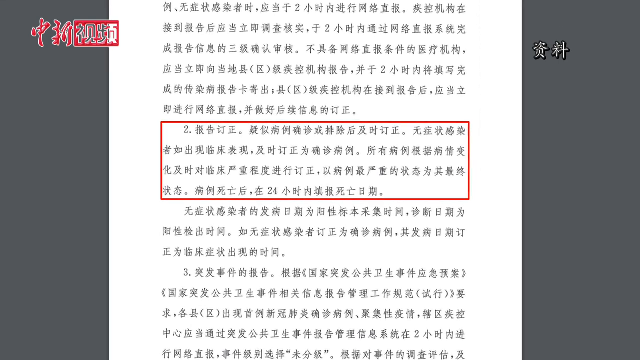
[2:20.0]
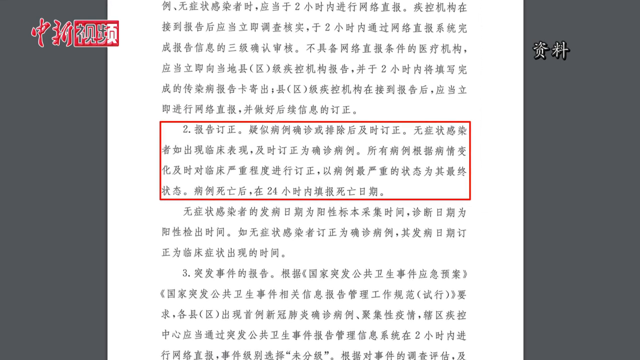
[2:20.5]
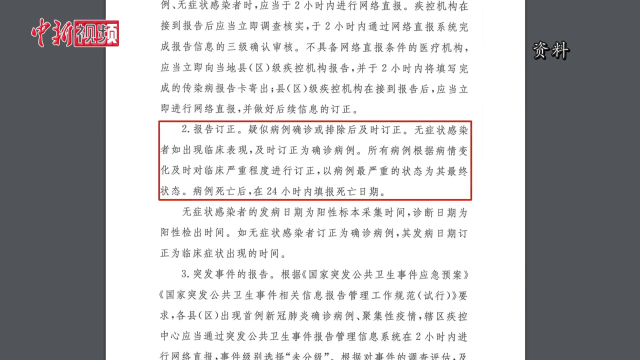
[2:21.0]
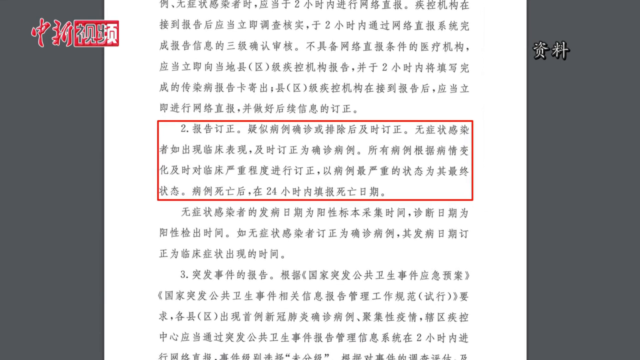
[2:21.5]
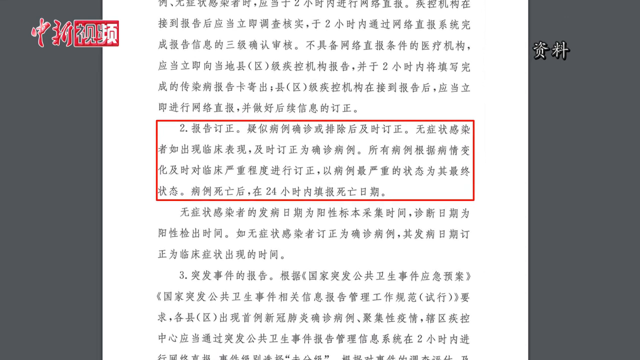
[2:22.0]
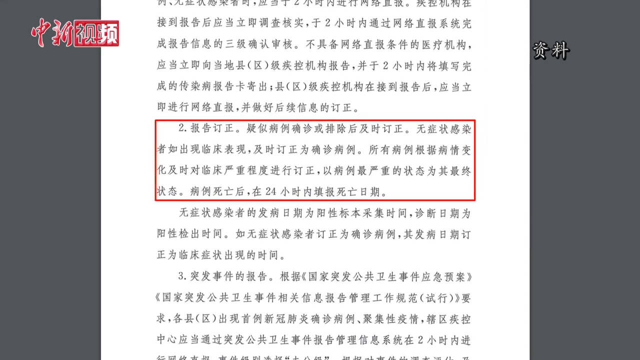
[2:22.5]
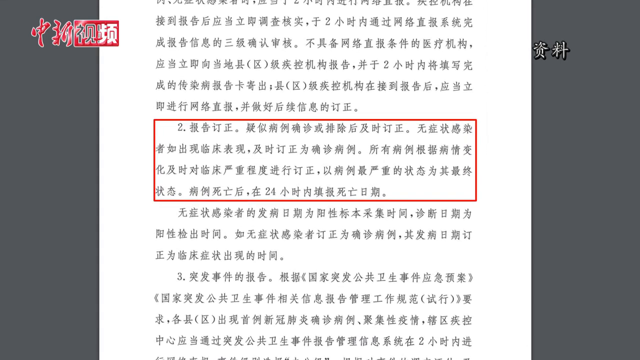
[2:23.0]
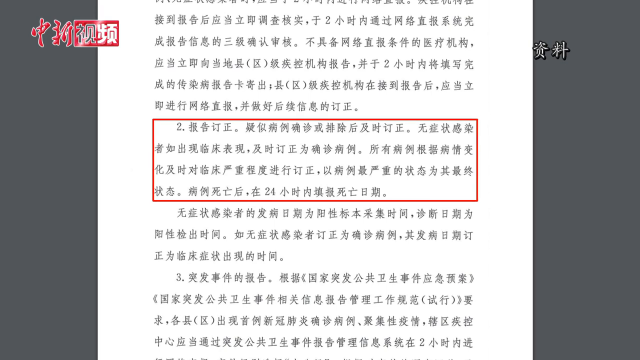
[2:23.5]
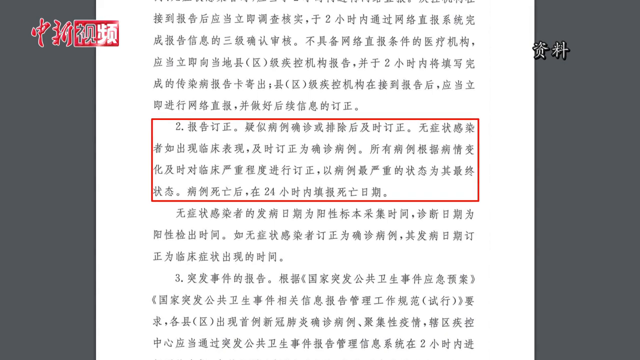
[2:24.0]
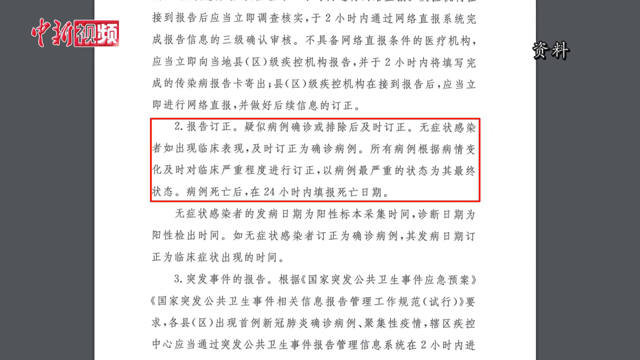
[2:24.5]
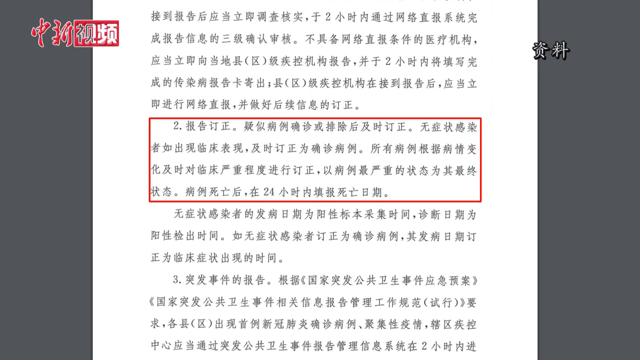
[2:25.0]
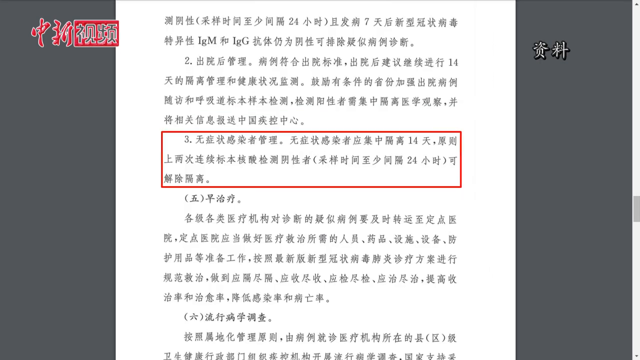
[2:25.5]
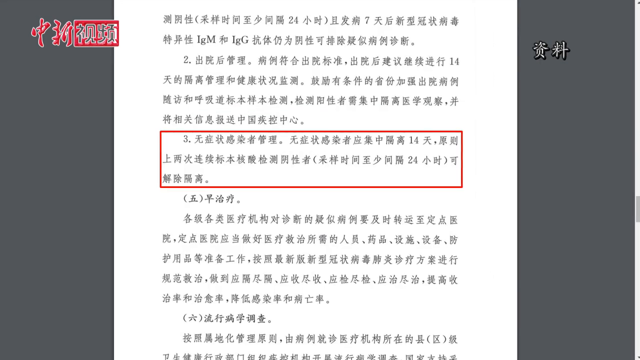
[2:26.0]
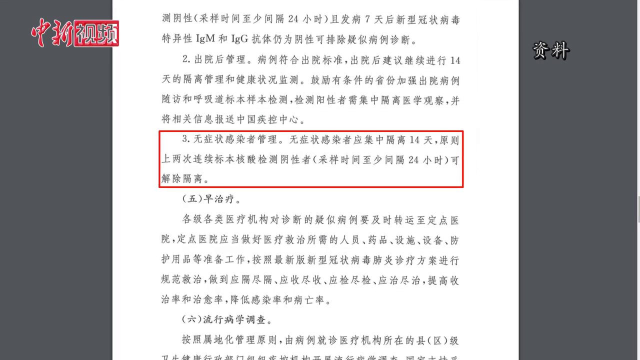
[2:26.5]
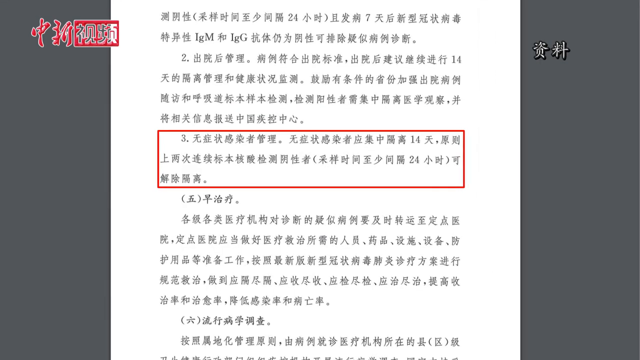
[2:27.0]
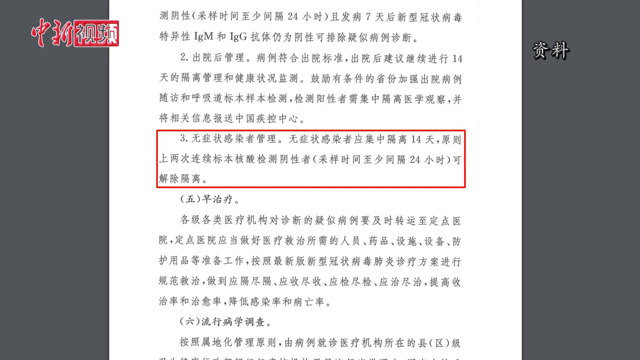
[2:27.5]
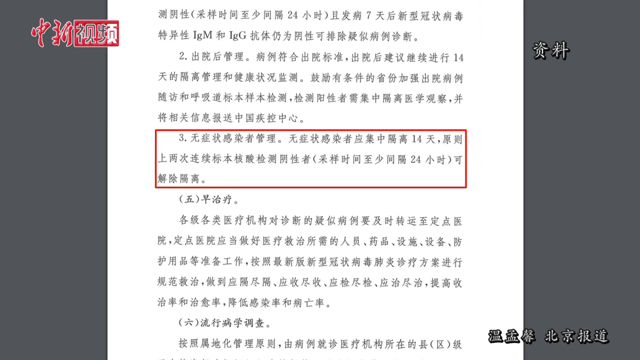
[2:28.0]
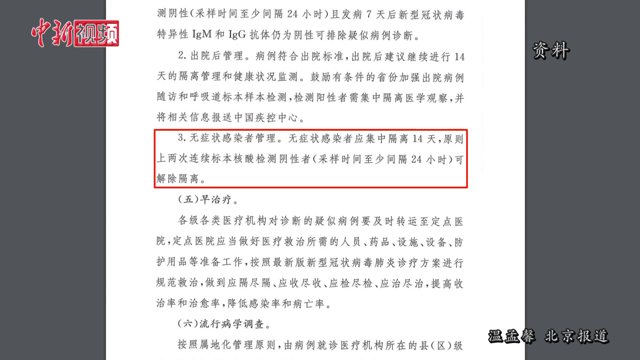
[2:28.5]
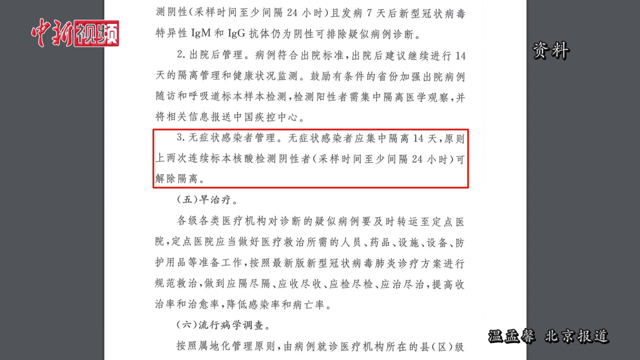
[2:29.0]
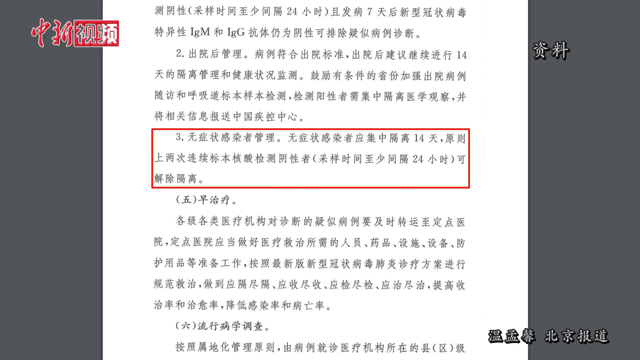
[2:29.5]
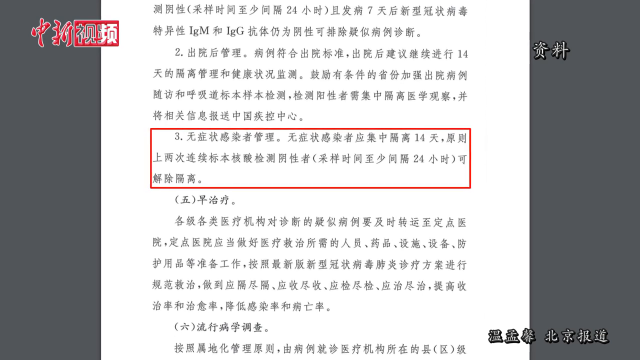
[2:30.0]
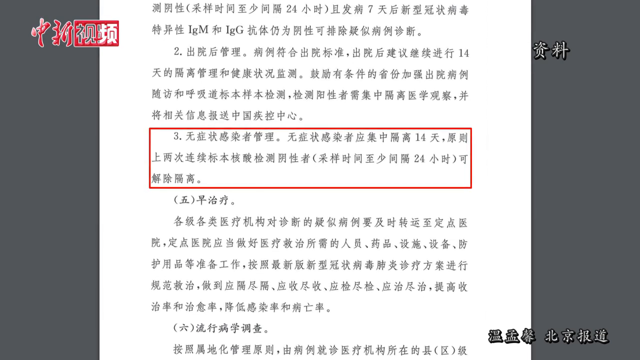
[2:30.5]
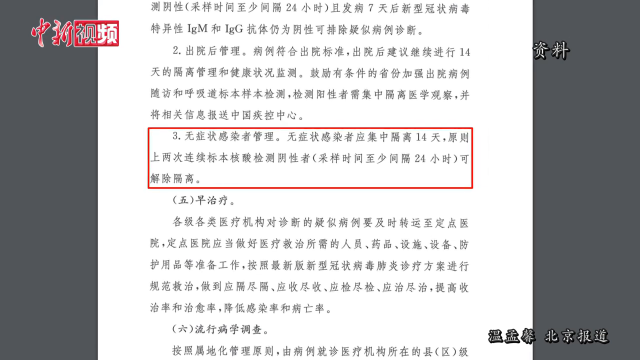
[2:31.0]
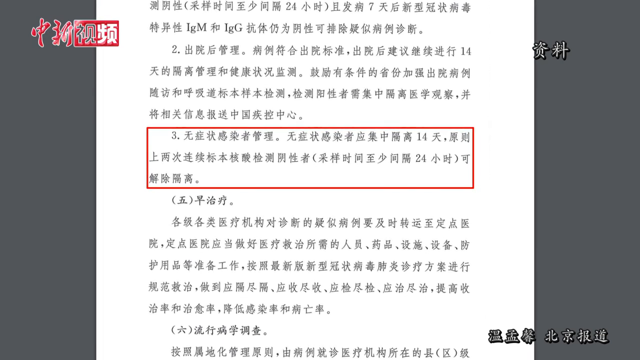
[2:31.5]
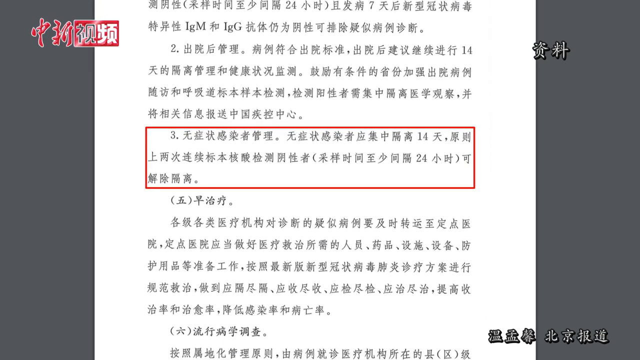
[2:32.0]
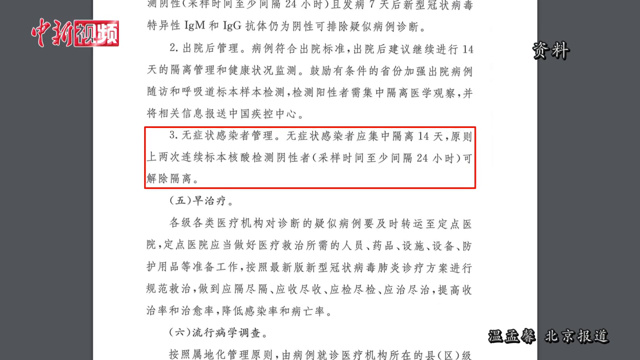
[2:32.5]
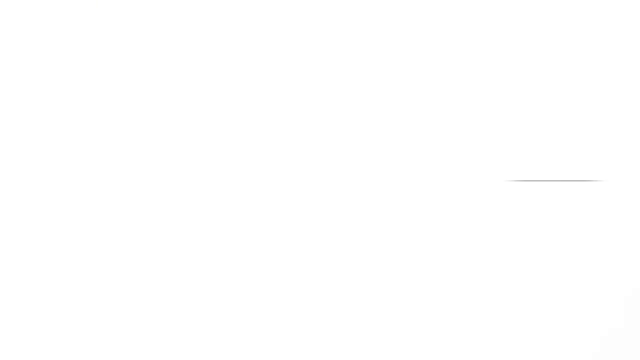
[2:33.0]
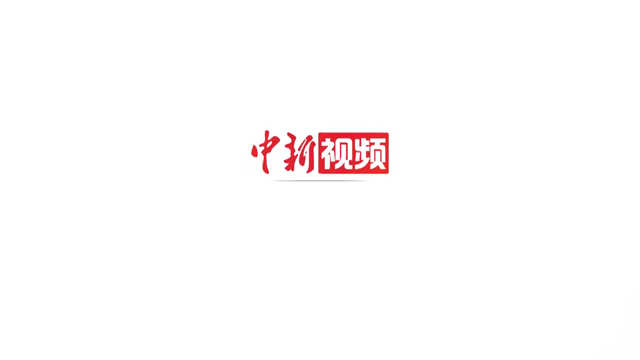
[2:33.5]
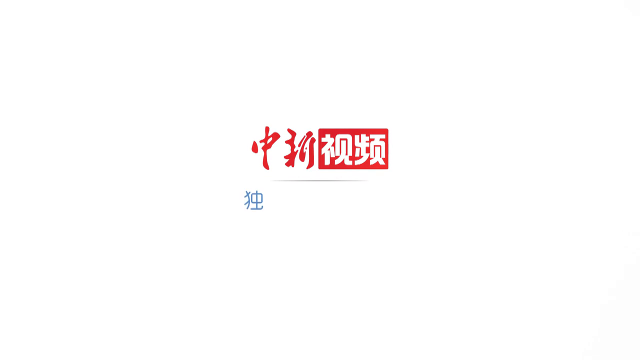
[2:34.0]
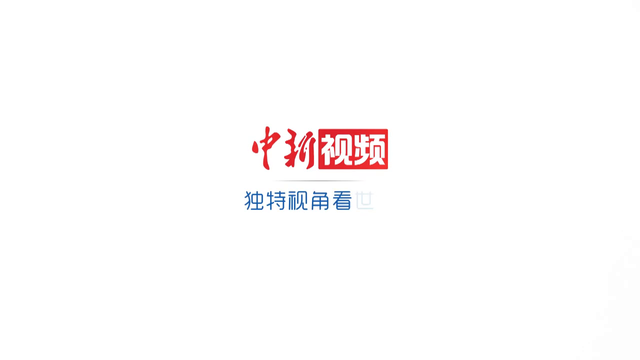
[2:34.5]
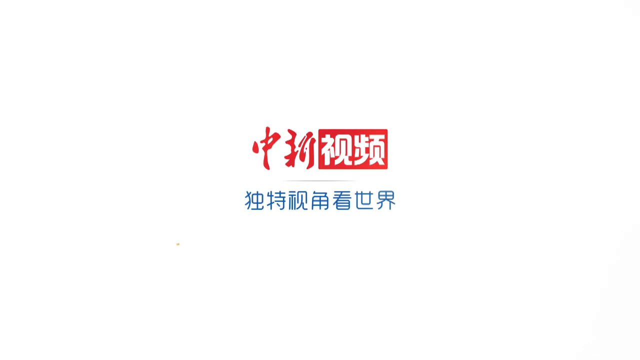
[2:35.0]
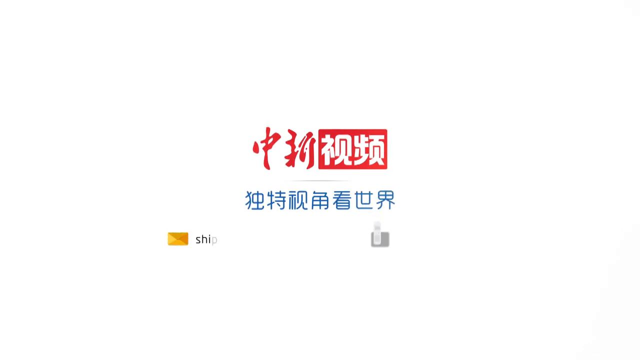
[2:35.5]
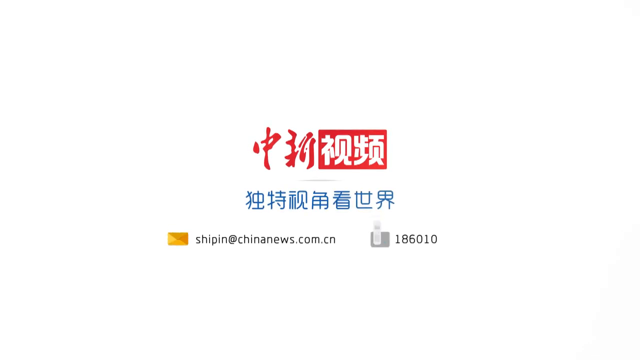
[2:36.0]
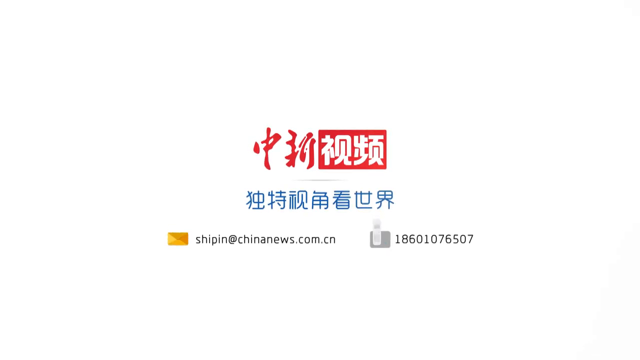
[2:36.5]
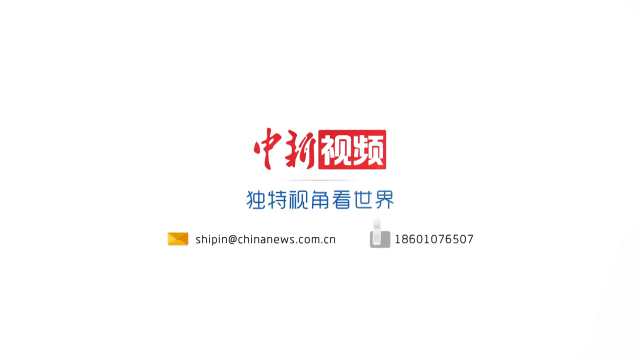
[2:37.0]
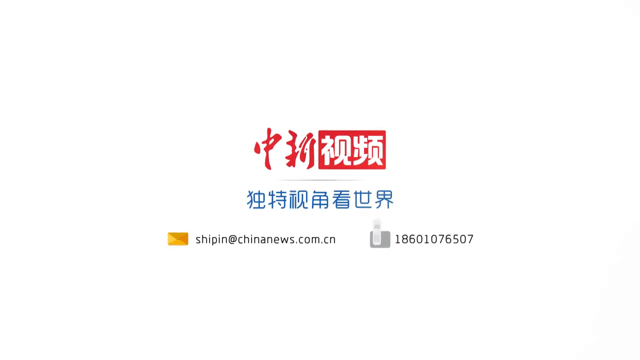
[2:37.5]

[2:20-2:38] The video returns to the document, which looks like a screen capture of a computer screen. The document is numbered, and items number two and number three are highlighted. The video ends with a logo and some contact information.